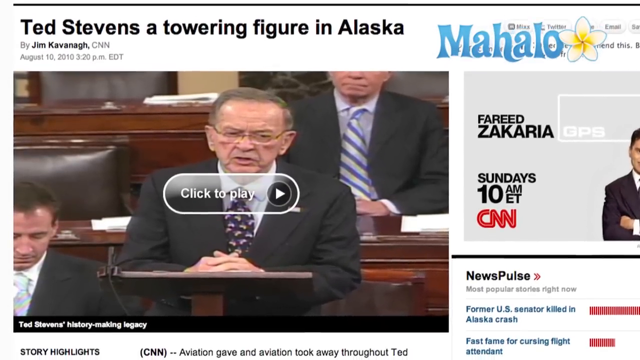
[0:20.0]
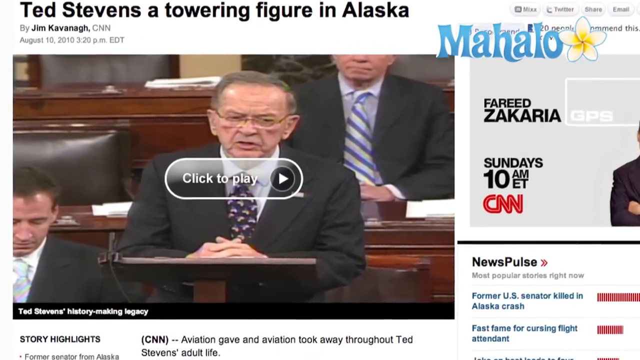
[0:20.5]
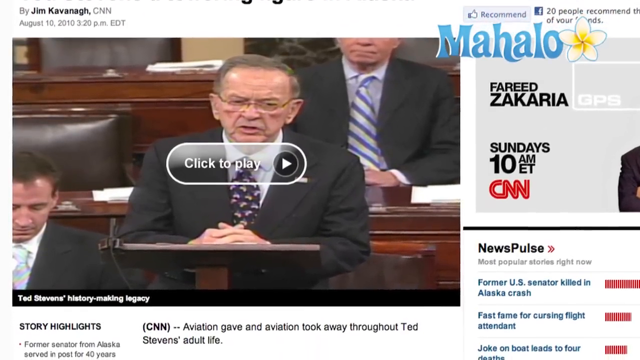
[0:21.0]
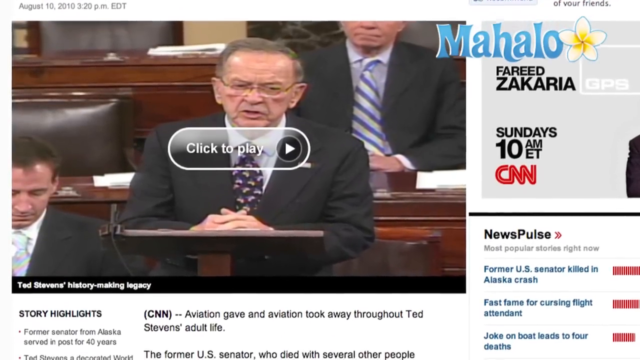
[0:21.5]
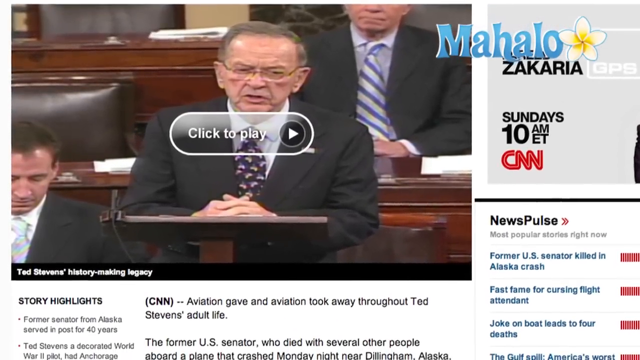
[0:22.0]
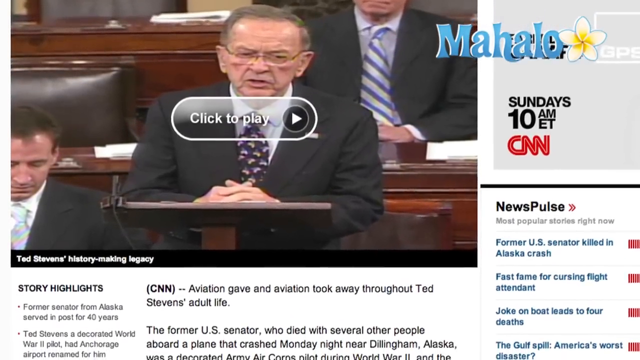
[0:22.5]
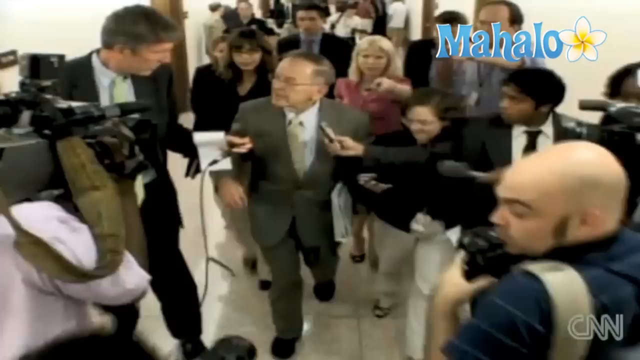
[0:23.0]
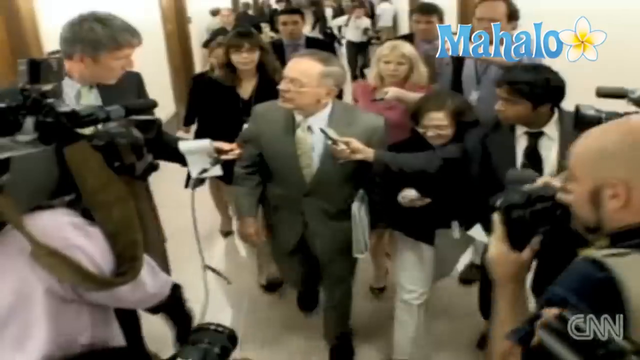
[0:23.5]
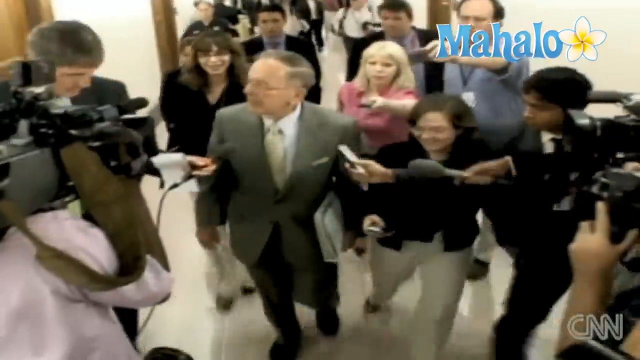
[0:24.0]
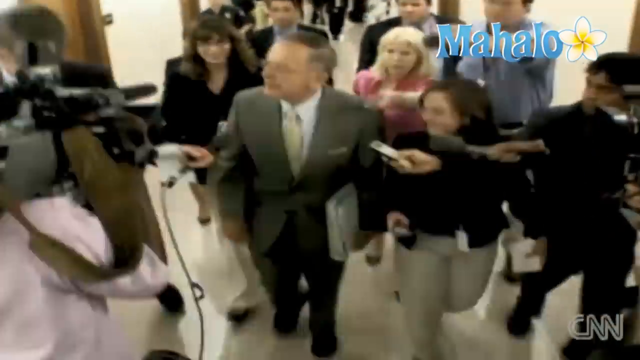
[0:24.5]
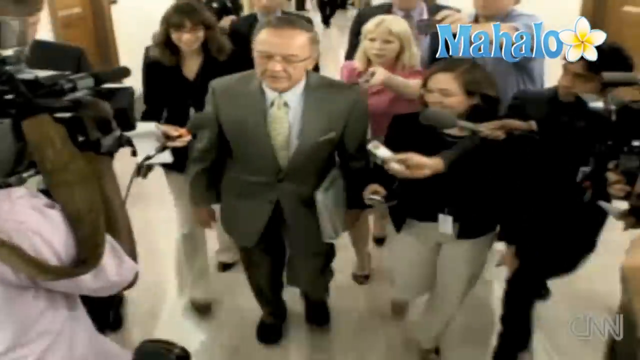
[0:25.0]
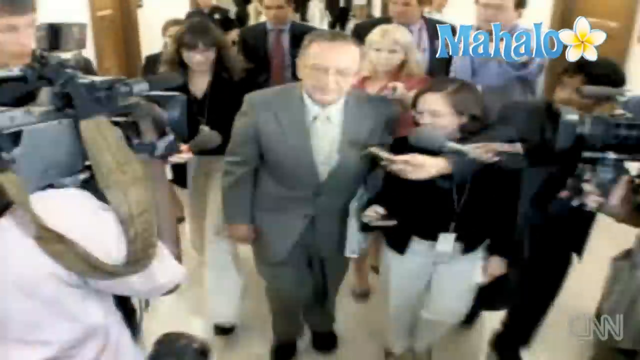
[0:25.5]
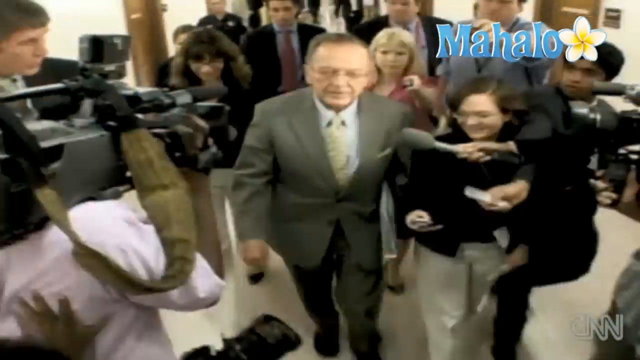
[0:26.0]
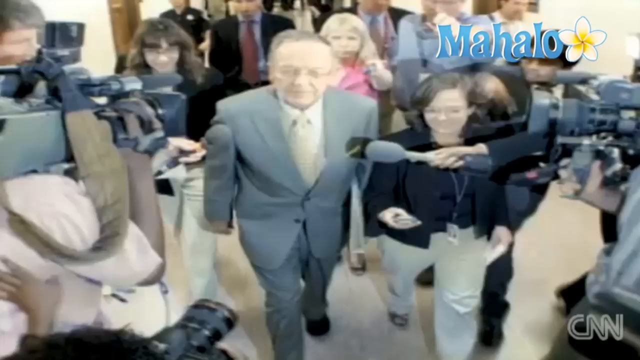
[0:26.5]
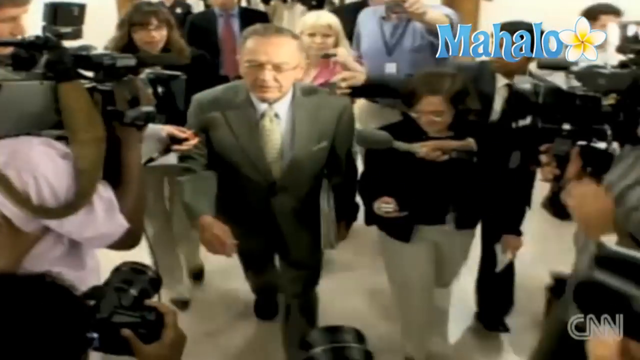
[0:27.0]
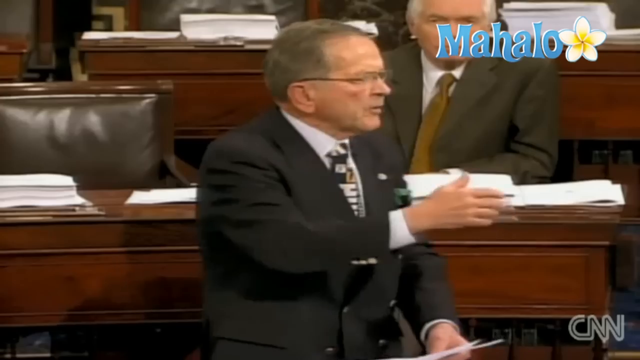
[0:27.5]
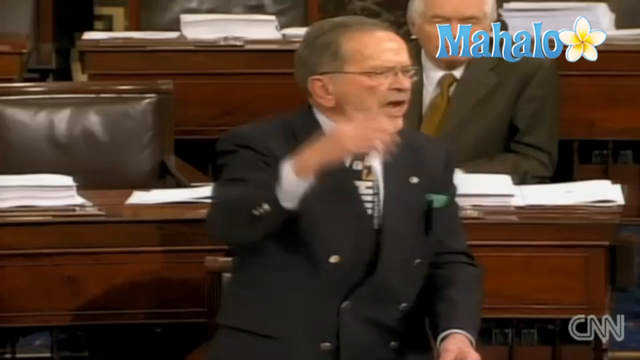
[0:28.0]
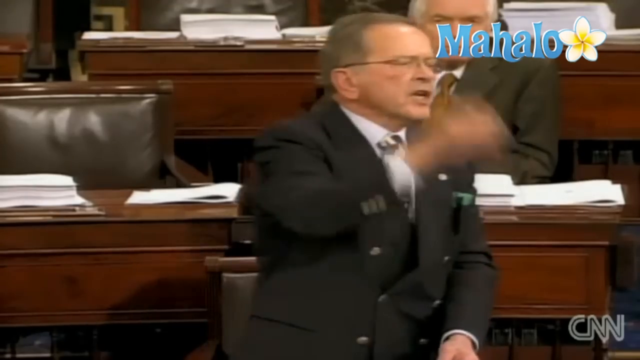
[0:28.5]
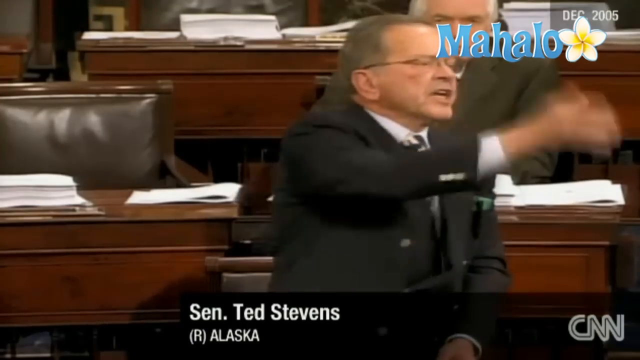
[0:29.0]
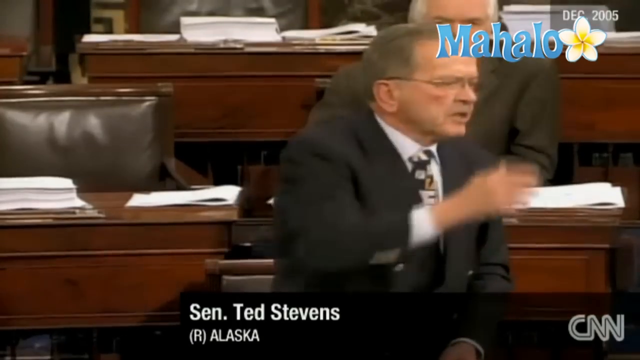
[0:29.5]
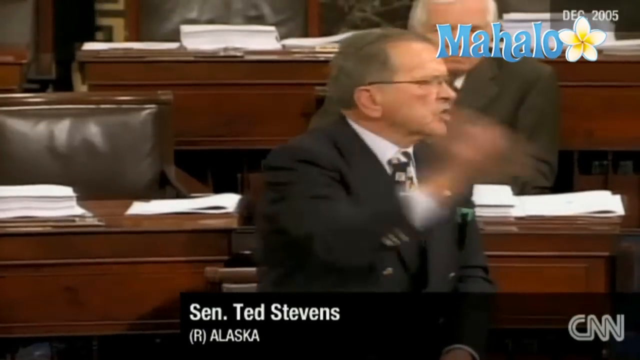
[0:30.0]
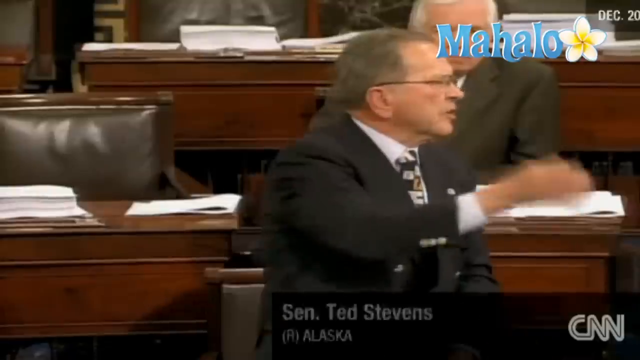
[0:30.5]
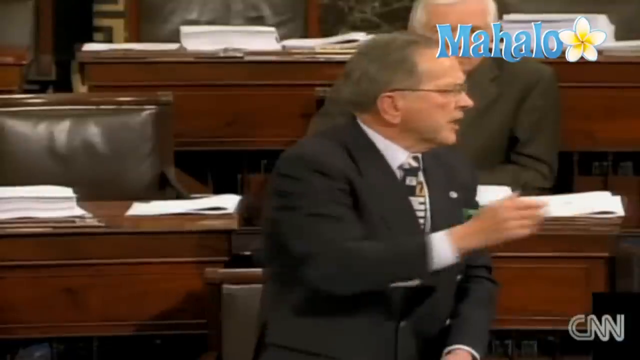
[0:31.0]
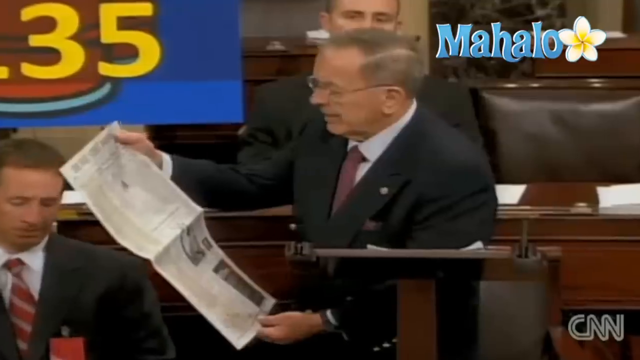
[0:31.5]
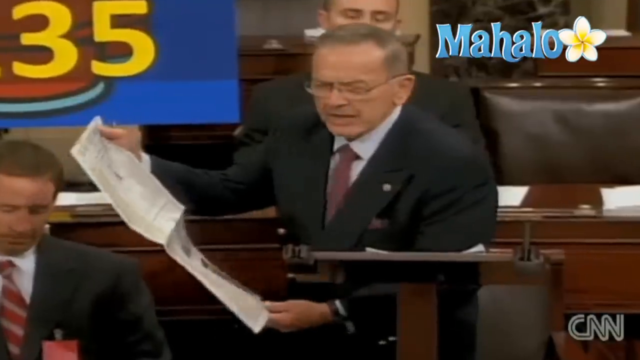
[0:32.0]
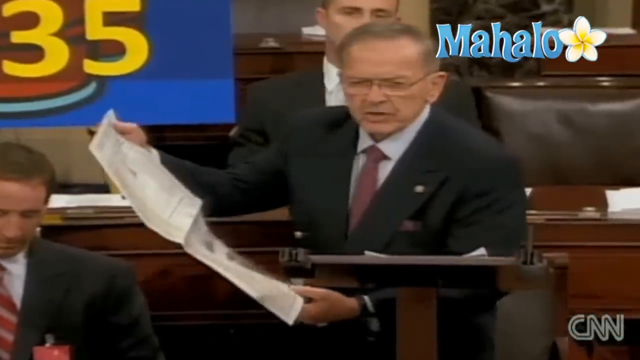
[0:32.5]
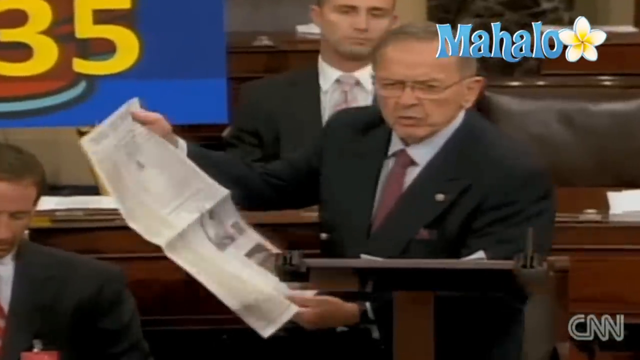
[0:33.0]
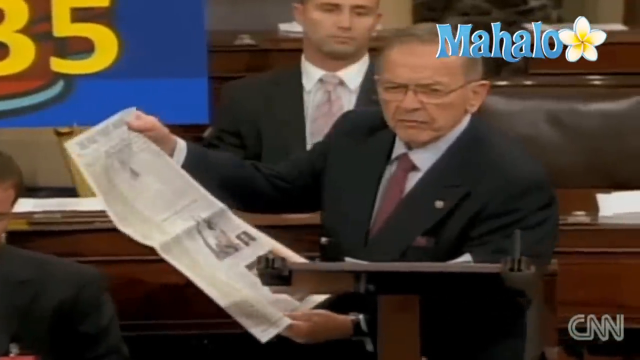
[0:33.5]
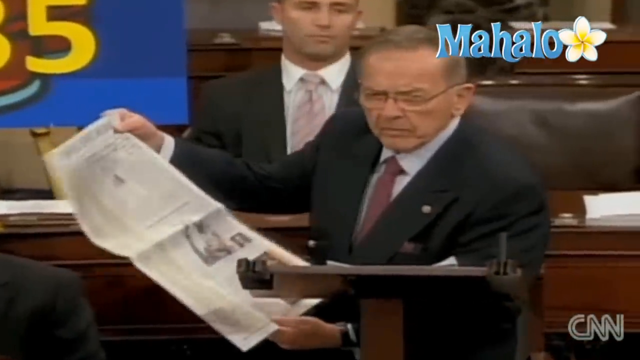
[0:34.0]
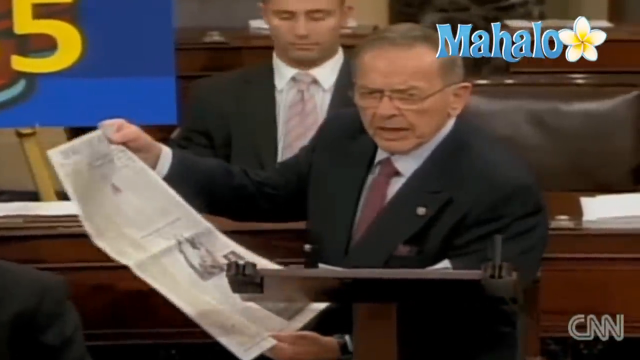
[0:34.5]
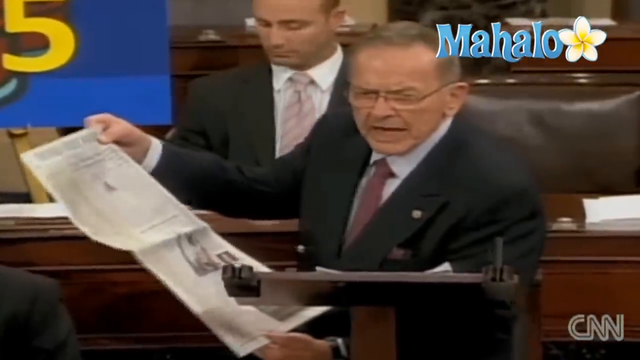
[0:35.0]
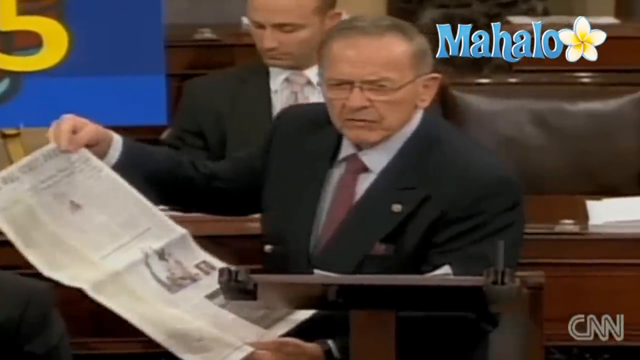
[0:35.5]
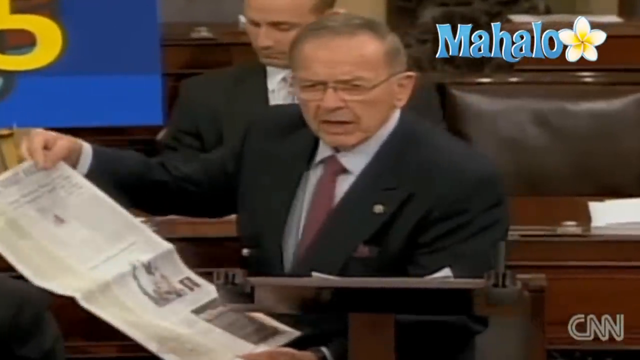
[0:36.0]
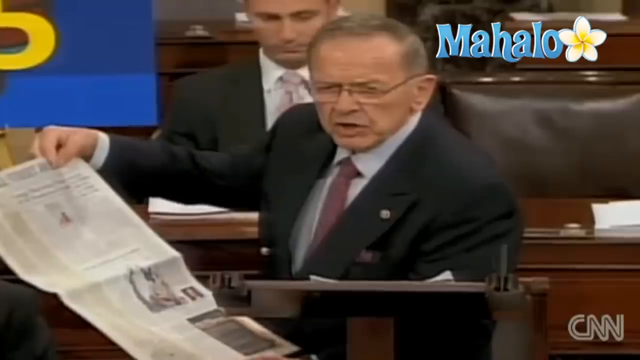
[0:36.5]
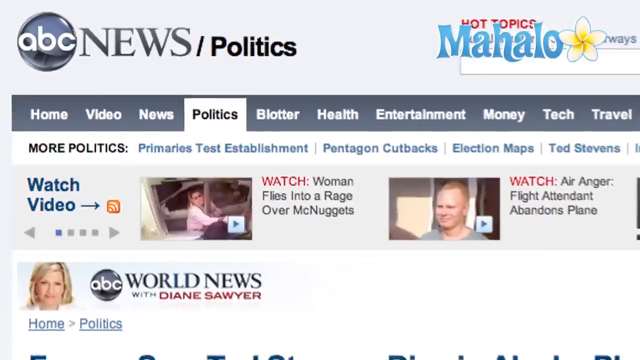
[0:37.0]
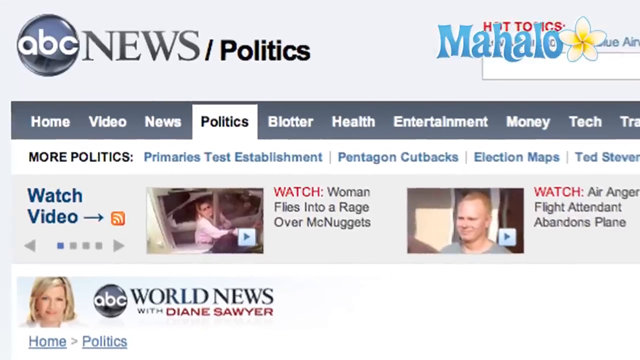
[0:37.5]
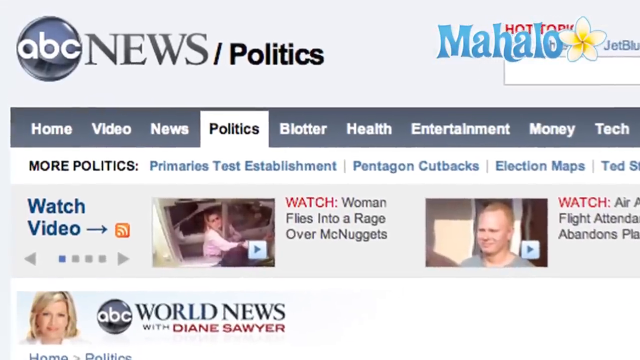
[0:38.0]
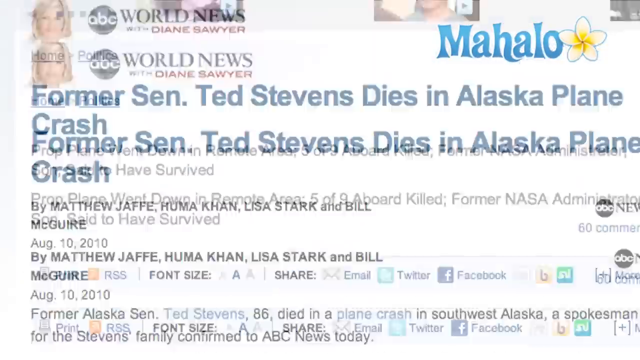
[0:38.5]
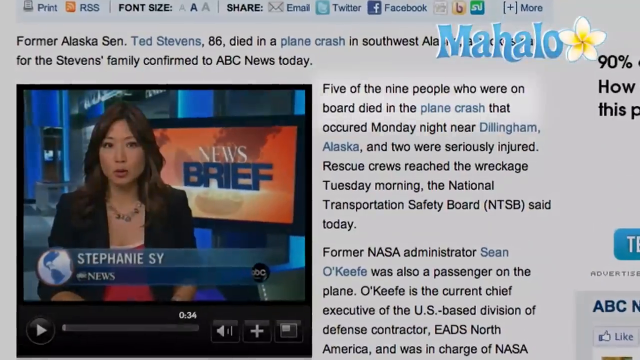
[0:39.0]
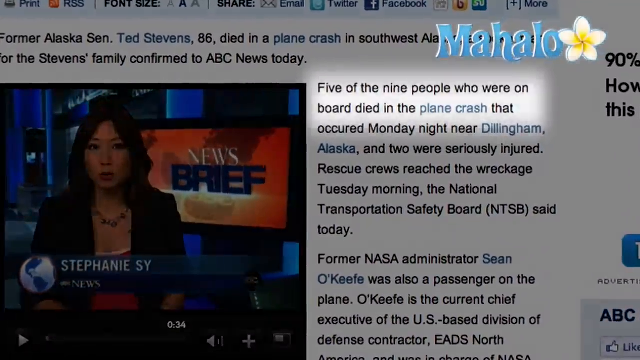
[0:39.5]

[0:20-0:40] A news article on CNN's politics webpage is titled "Ted Stevens a towering figure in politics" and was posted by Jim Kavanaugh of CNN on 10 August 2010. The post contains a video of Ted Stevens giving what appears to be a speech in the senate. Ted Stevens then walks along a corridor, formally dressed in a suit and holding a file, followed by many reporters with microphones and cameras trying to get a glimpse of him. The scene then moves to Stevens giving a speech in the senate; judging by his body language and facial expression he seems quite animated and angry. In the background, some of his formally dressed colleagues look on as he speaks. Later he picks up a news article and seems to be reading it, and his facial expression seems to show disgust.